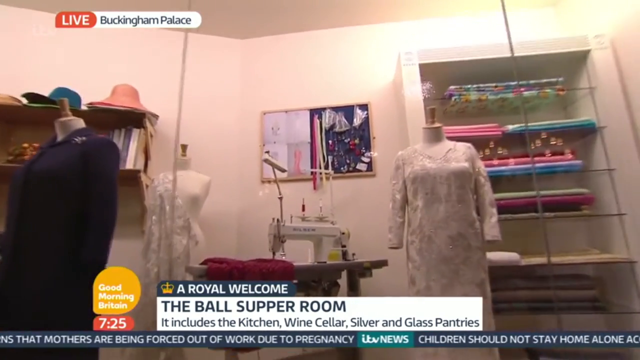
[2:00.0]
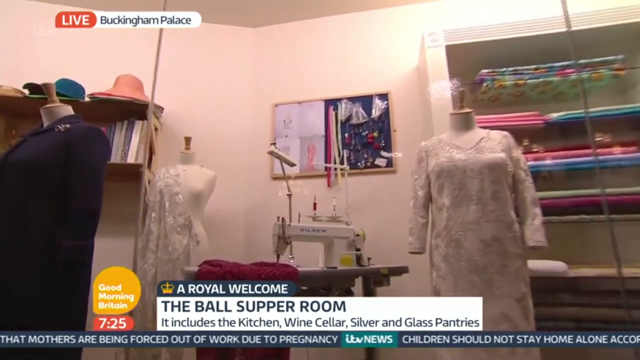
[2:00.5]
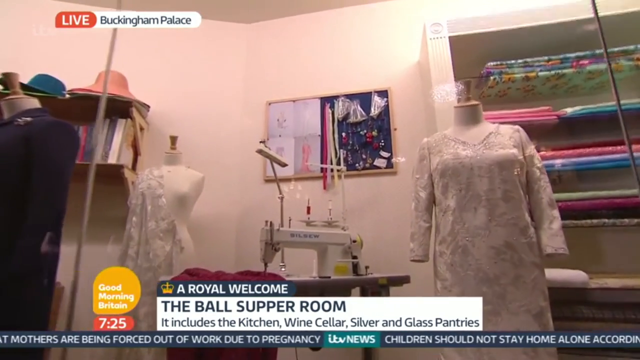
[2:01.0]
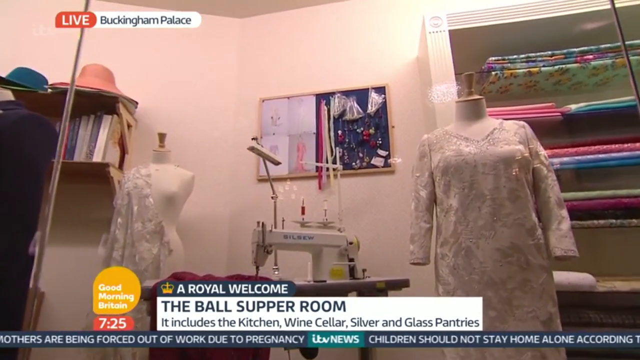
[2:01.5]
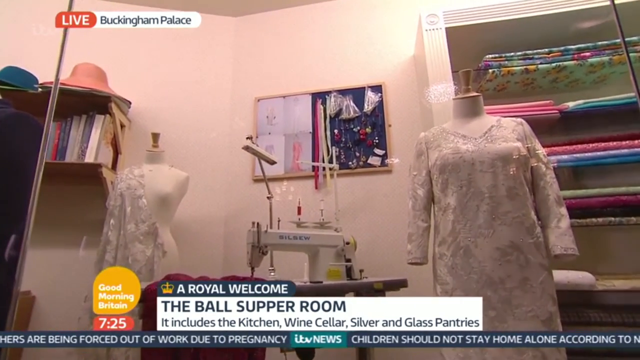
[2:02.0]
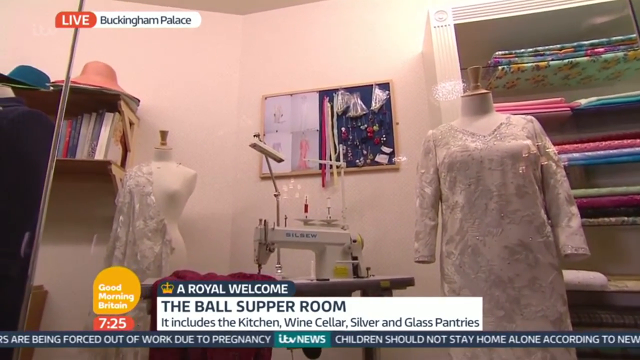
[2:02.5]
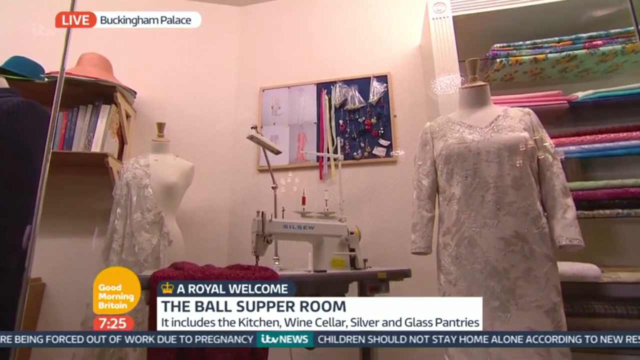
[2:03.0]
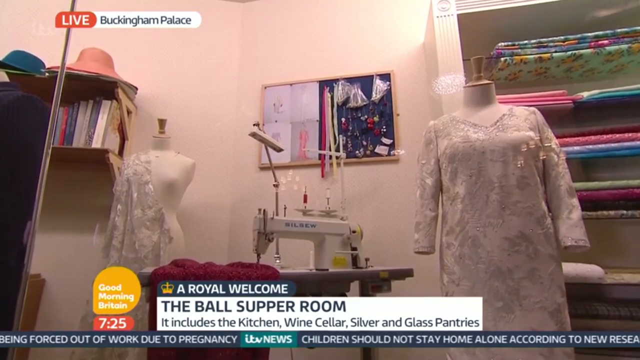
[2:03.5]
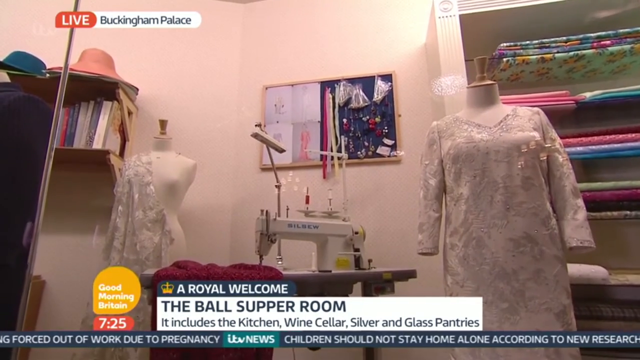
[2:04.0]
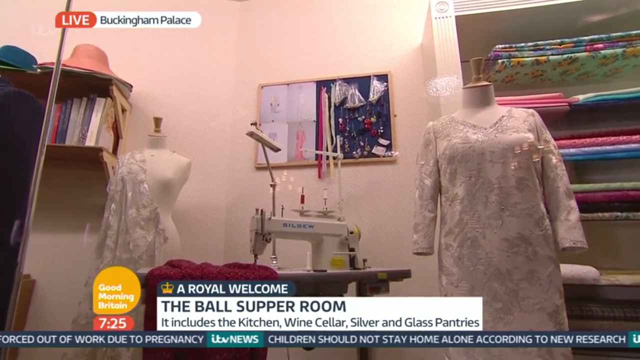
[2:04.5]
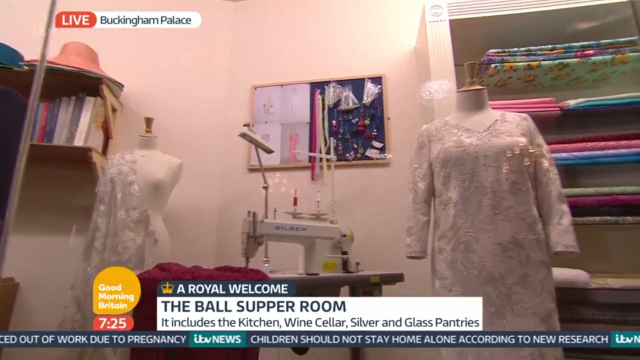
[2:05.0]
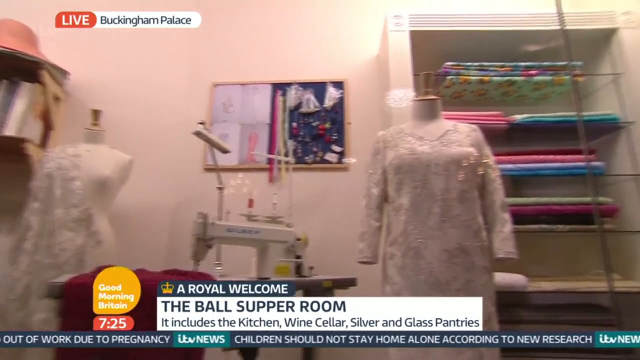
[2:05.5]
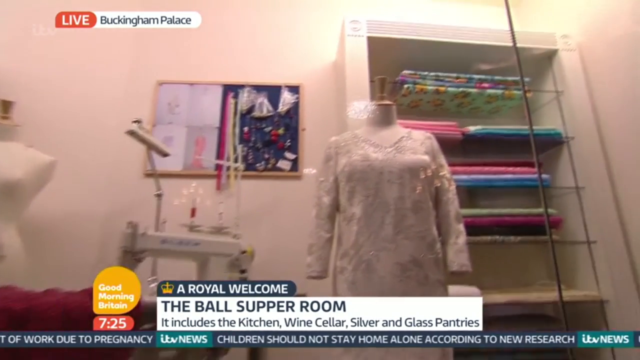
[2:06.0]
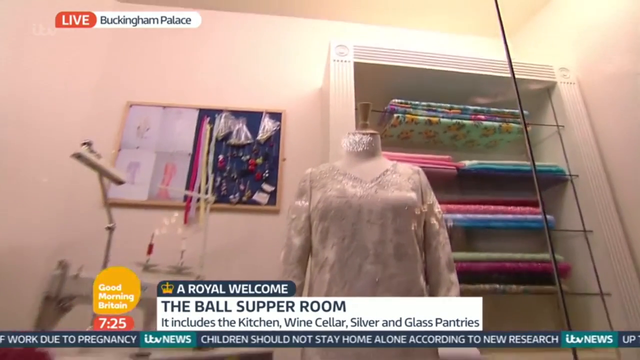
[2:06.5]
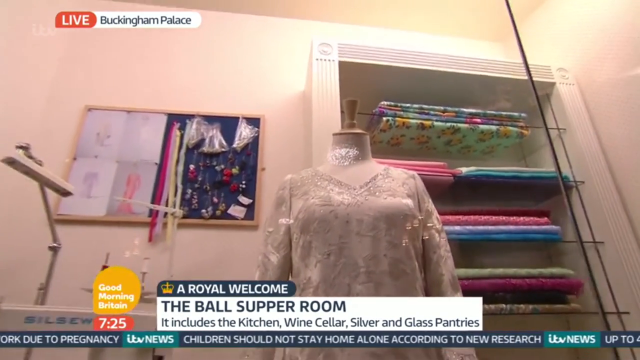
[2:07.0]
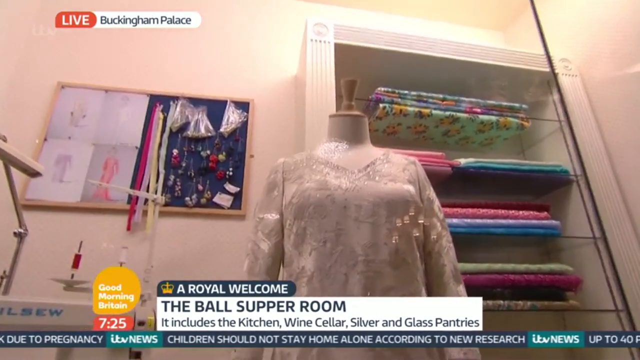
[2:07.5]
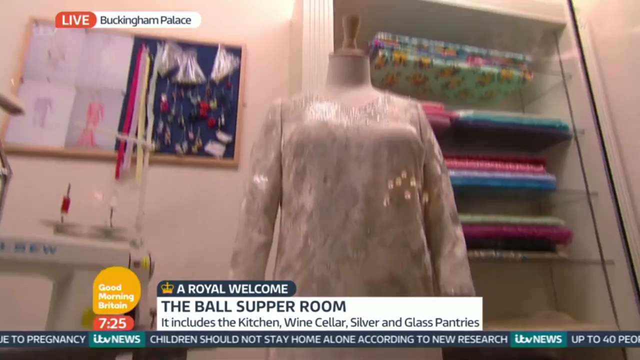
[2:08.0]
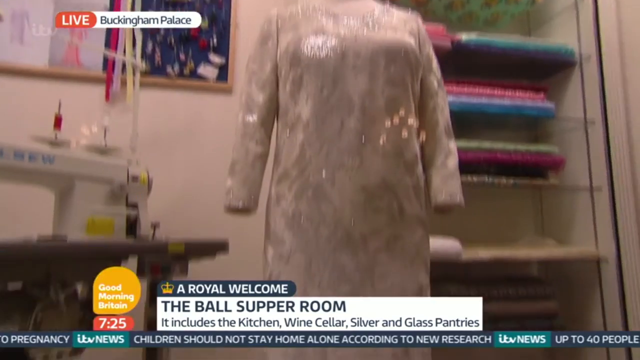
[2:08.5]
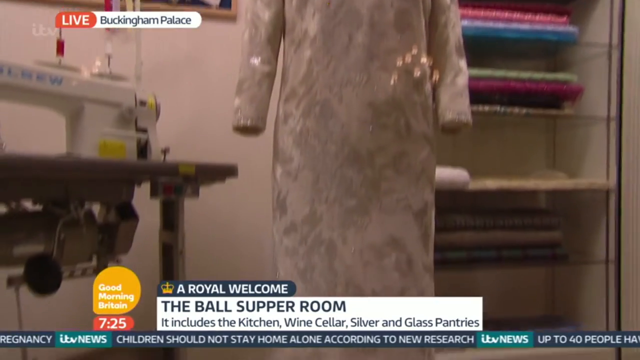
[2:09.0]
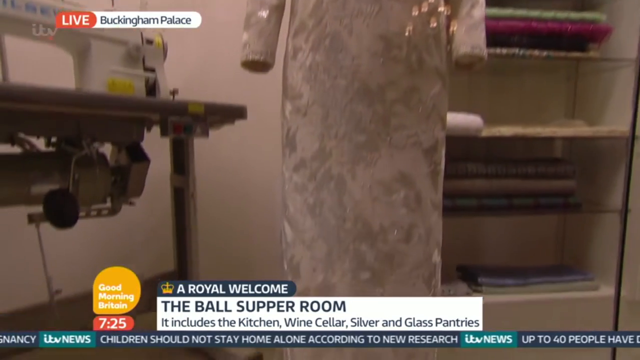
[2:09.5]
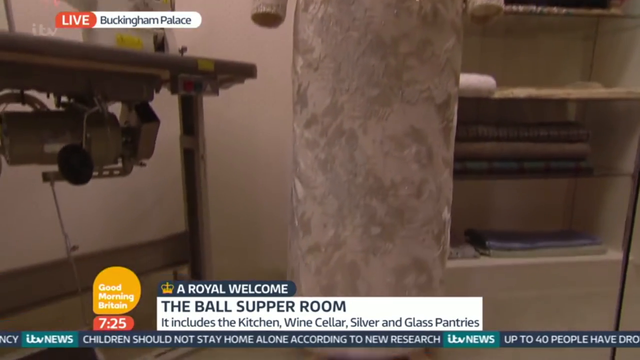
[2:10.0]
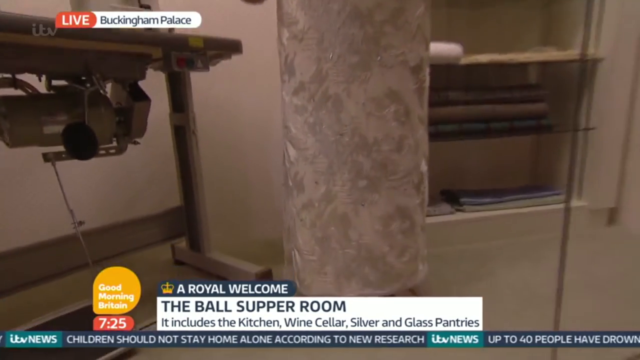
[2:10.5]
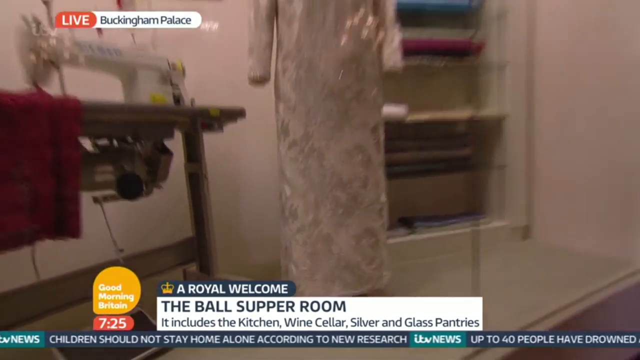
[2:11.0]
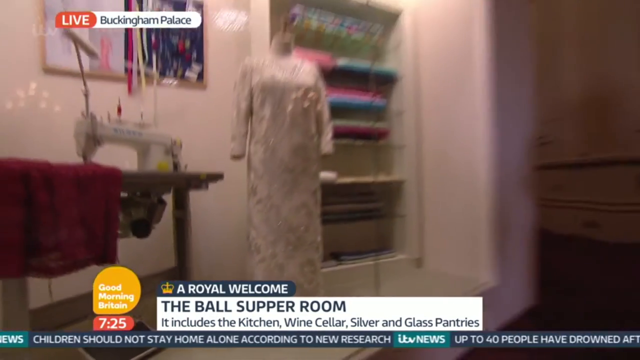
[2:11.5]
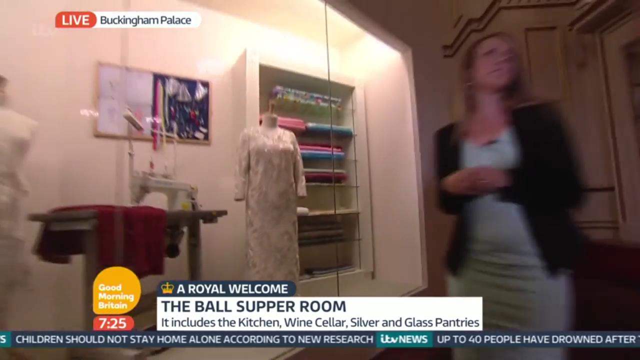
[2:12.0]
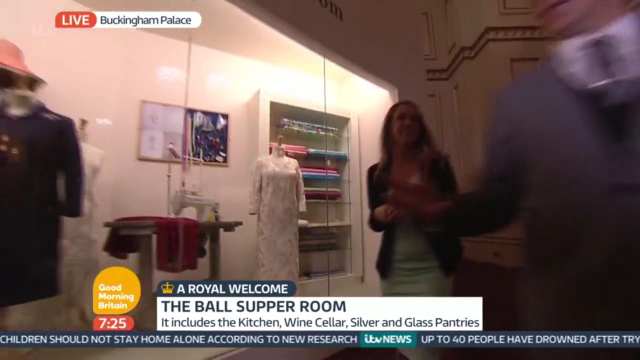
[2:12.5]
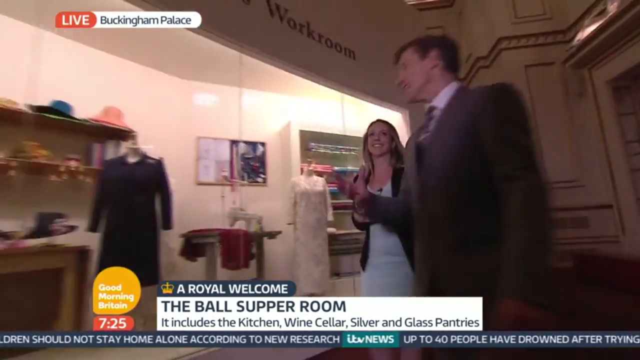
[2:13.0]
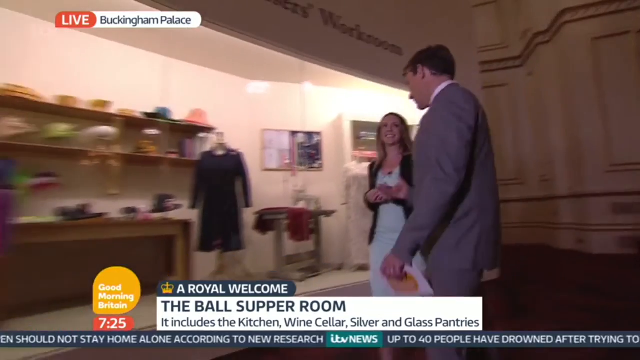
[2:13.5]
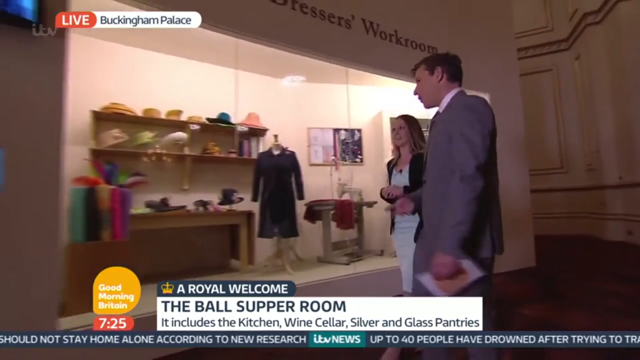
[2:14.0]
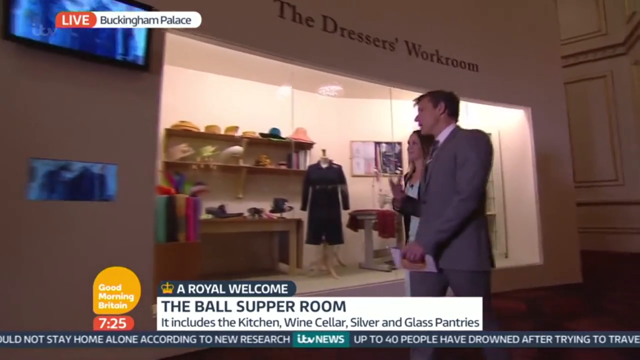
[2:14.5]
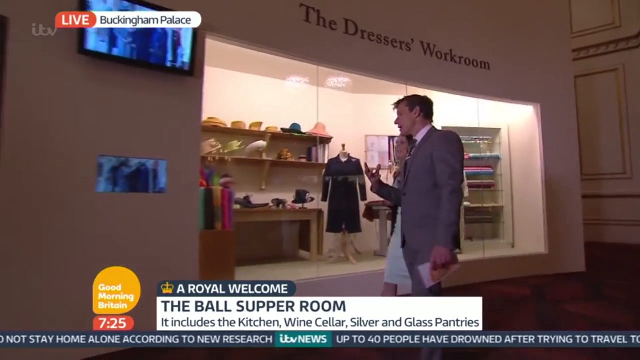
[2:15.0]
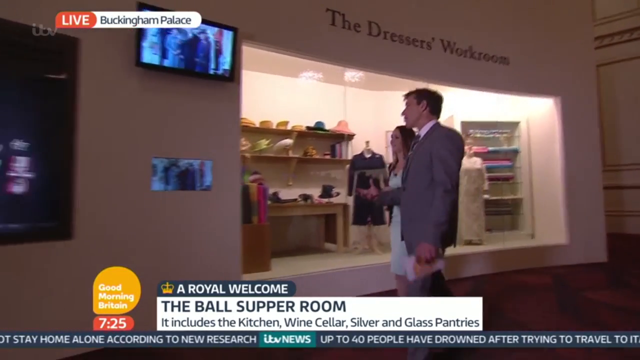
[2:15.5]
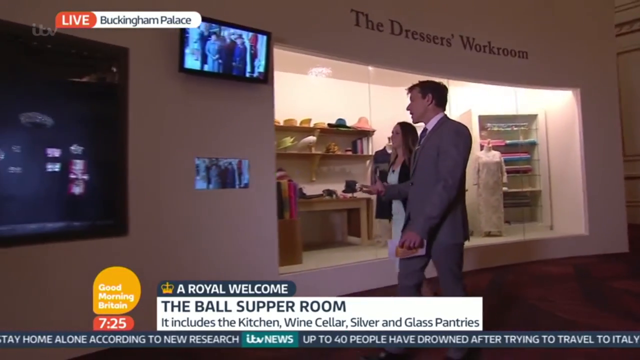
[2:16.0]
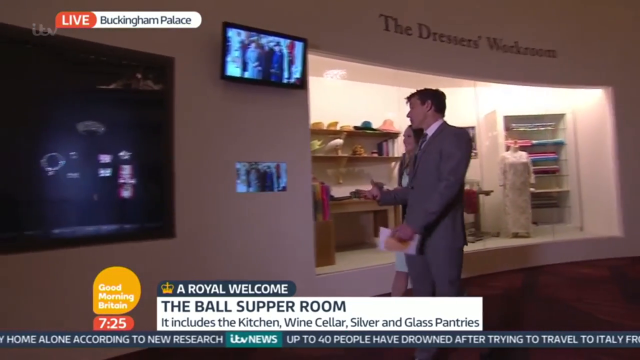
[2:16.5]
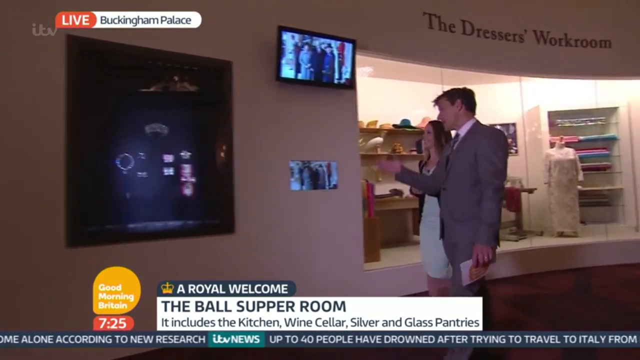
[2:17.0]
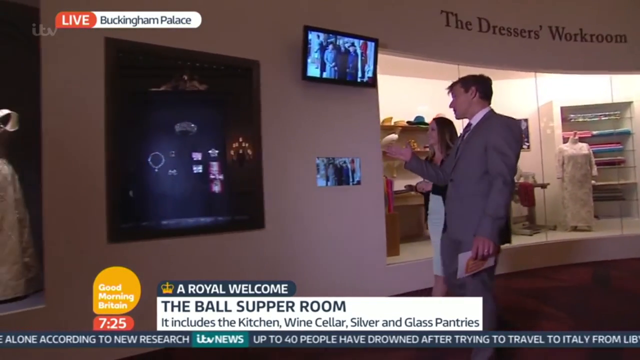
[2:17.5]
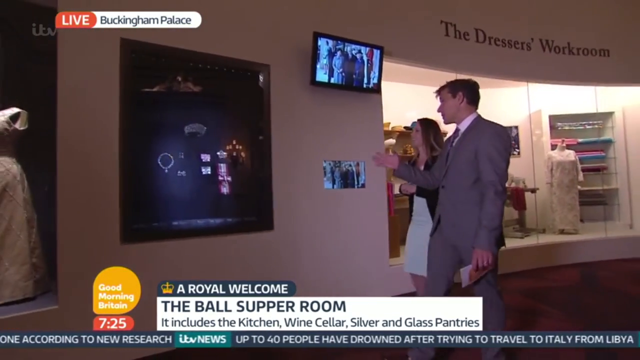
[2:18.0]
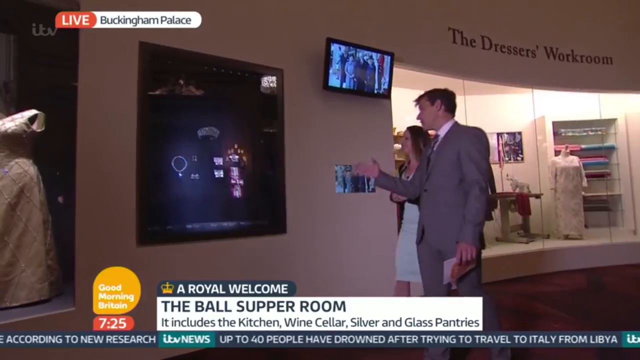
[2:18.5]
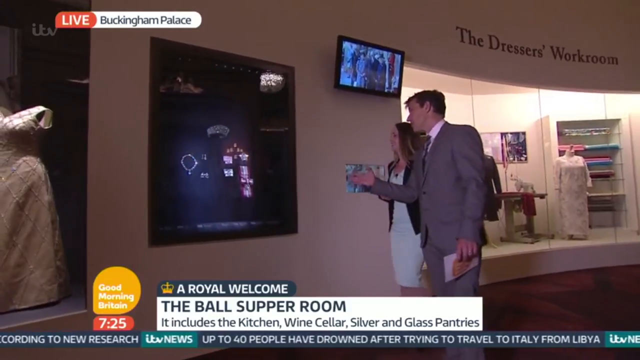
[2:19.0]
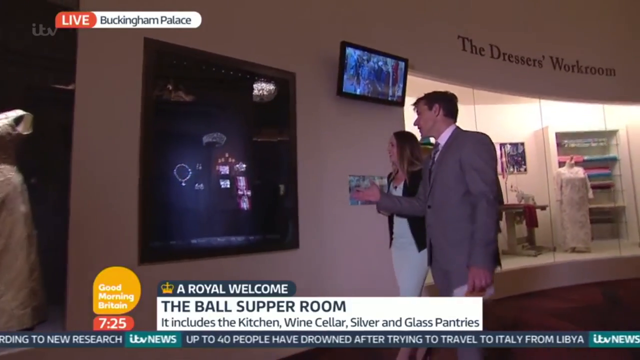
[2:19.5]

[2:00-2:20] In the lower left is a bubble with the words "Good Morning Britain", and below it a red bubble with the time "7:25". To the right, a white rectangle reads "the Ball Supper Room" with, below it, "it includes the kitchen, wine cellar, silver and glass pantries". Above it is a blue curved rectangle about half the size of the white one, with a yellow drawing of the British crown on the left and the words "a Royal Welcome" to the right. In the upper left are the words "live Buckingham Palace". Behind the glass windows of a museum exhibit, a white dress is on a mannequin on the right; to the left of the dress is a white sewing machine with some red cloth beneath it. The camera zooms in on the dress, starting at the top and panning down. The white dress is slightly shiny, with silver embroidery of what looks to be flowers over it. The camera zooms out to show the woman in a white dress with a black jacket over top and, to her right, the man in a gray suit and white shirt holding a white card in his left hand. The woman has her hands clasped in front of her chest. The man holds his left hand with the card down and gestures with his right hand, rolling it forward as he talks. Both walk forward, revealing that the exhibit they were in front of, set within a white wall, is named "the dresser's workroom". The two continue walking until they reach a small exhibit with jewelry hanging on the wall.